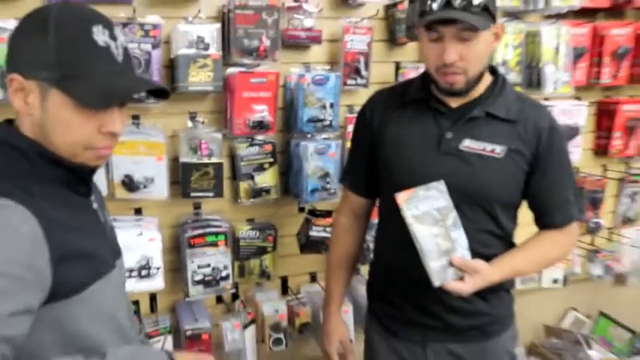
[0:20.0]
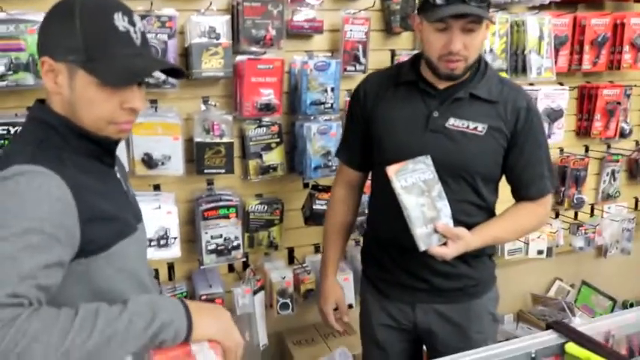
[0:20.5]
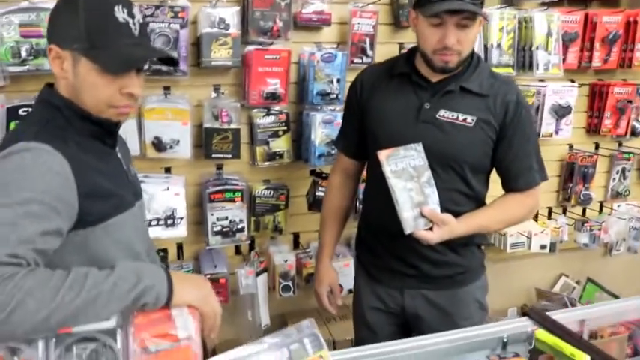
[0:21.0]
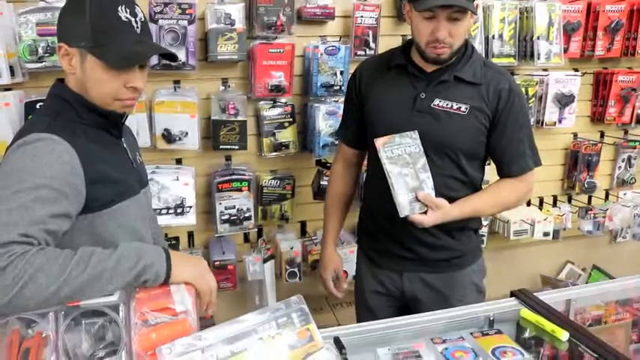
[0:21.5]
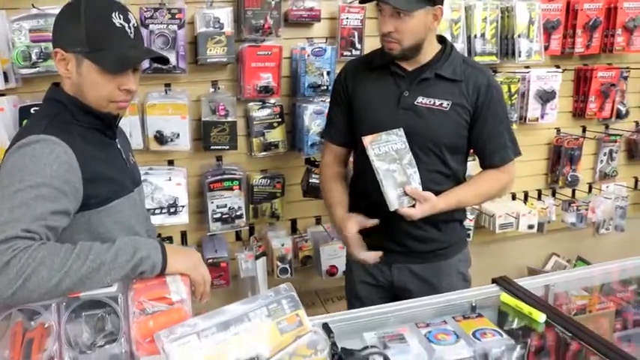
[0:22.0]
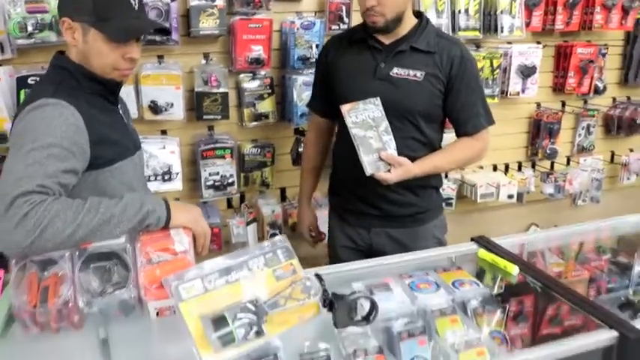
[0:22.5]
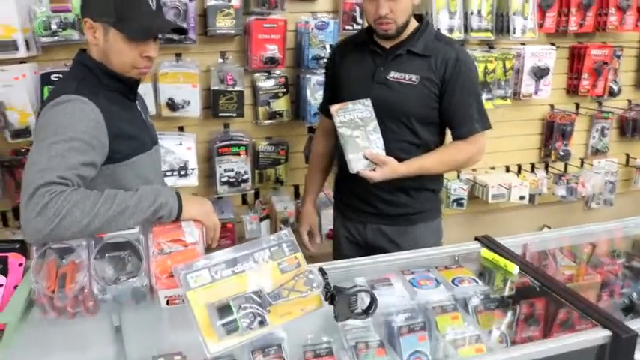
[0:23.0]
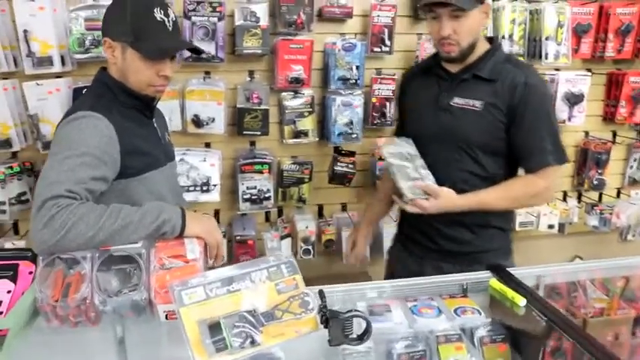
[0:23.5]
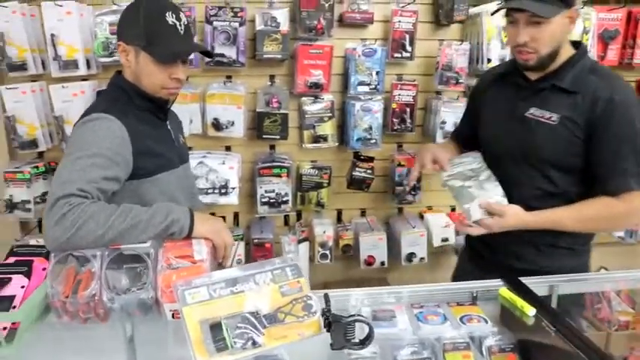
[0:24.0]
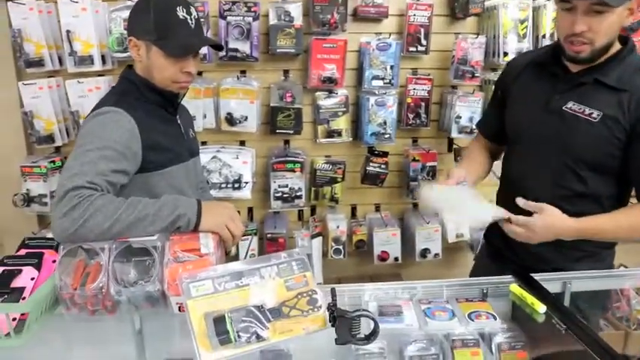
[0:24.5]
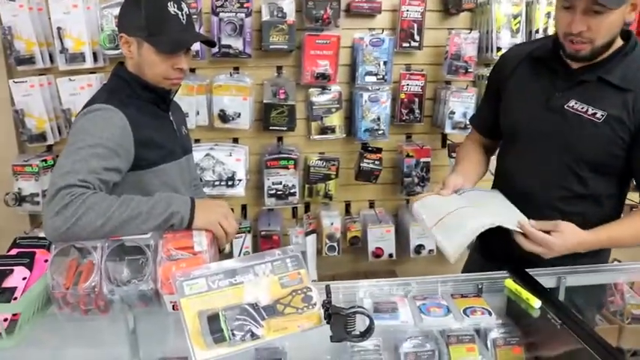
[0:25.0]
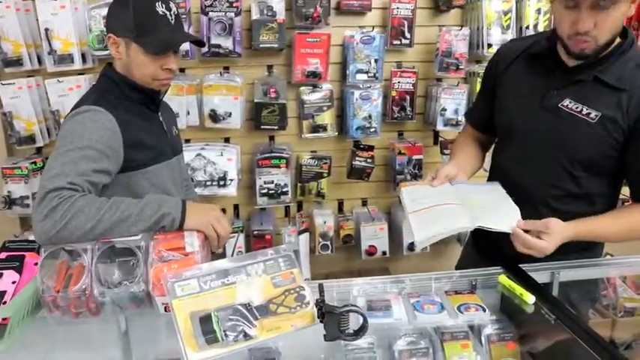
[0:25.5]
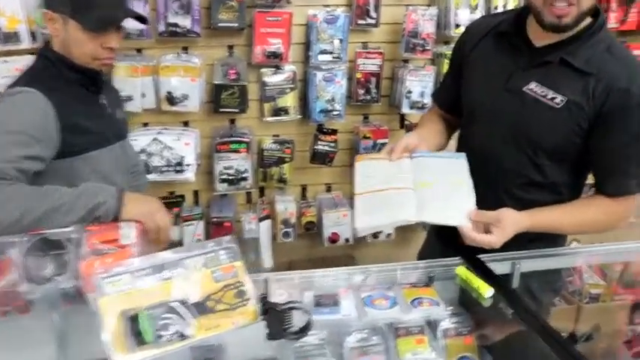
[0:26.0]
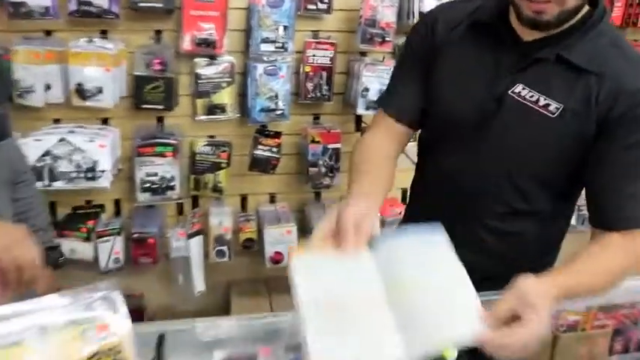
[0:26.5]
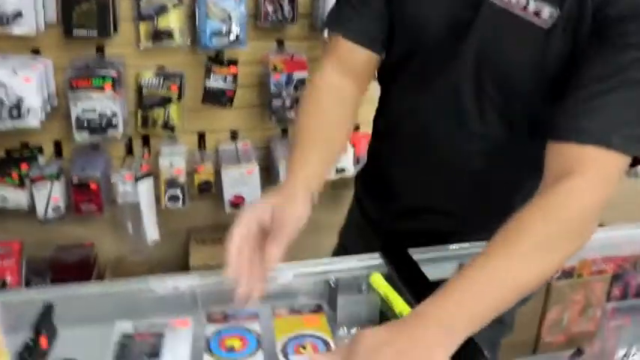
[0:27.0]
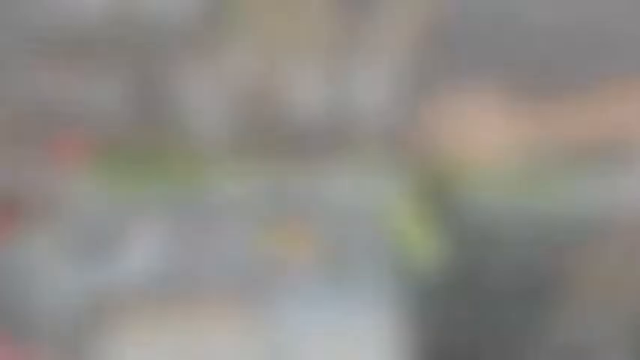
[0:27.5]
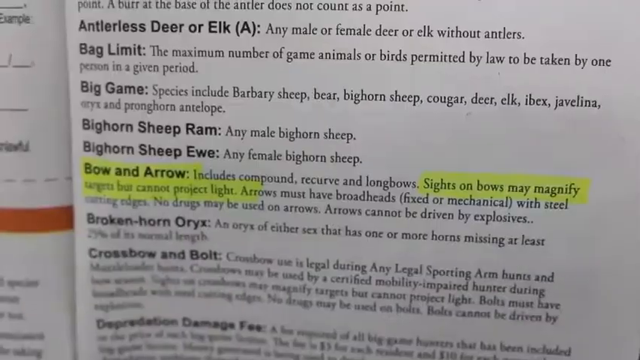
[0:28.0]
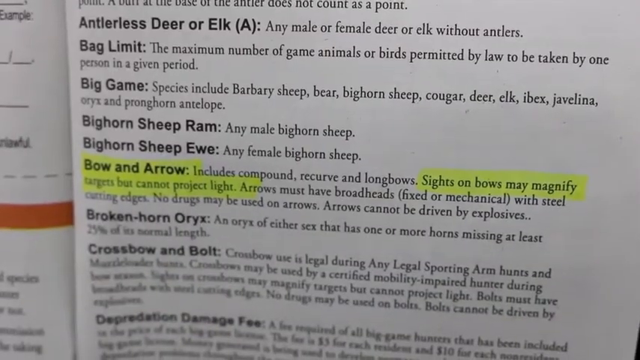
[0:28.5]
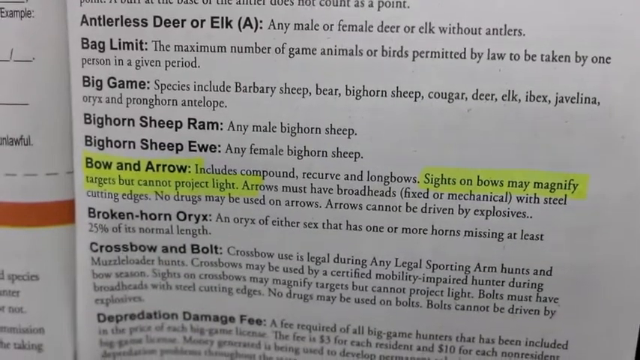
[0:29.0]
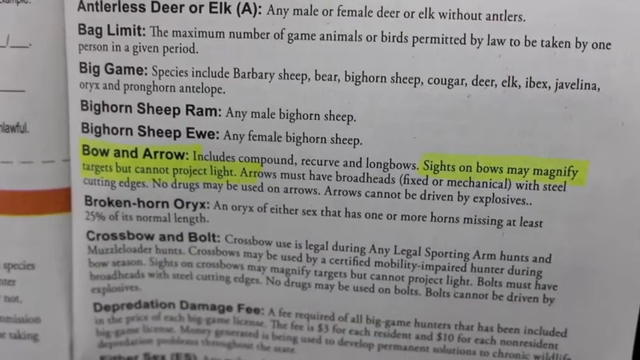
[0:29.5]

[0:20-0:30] Two men are behind the counter in a shop. The man on the right wears a black baseball hat and a black polo top. The man on the left, slightly shorter, also wears a black baseball hat along with an Under Armour grey and black jacket. There is a bunch of items on the counter, and the man on the left leans his right arm on them. The man on the right shows a piece of paper to the camera, and the camera zooms in on it. It appears to be a section of a book headed "bow and arrow", with the text "sights on bows may magnify targets but cannot project light" highlighted.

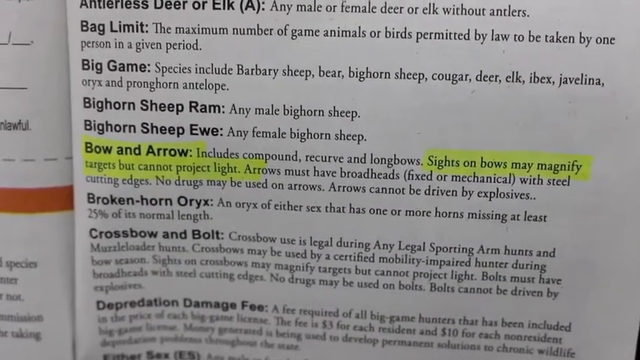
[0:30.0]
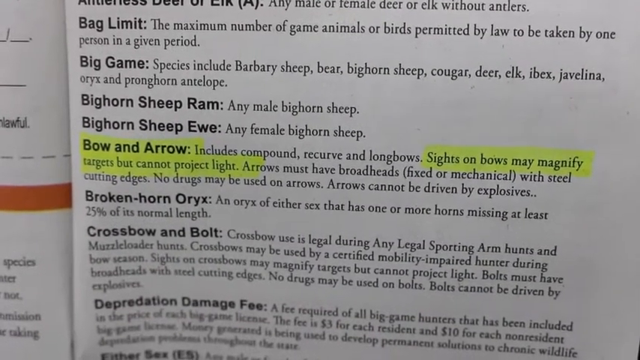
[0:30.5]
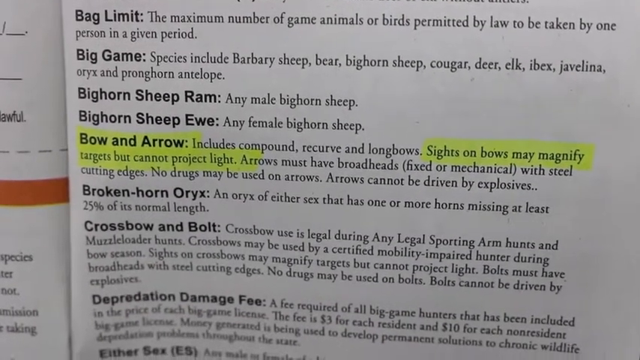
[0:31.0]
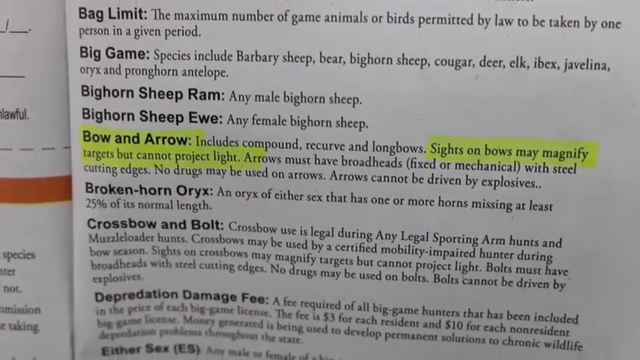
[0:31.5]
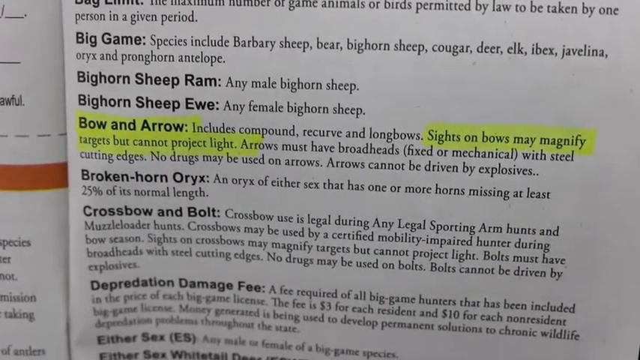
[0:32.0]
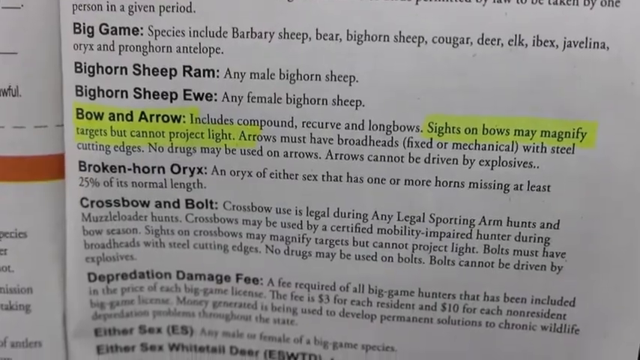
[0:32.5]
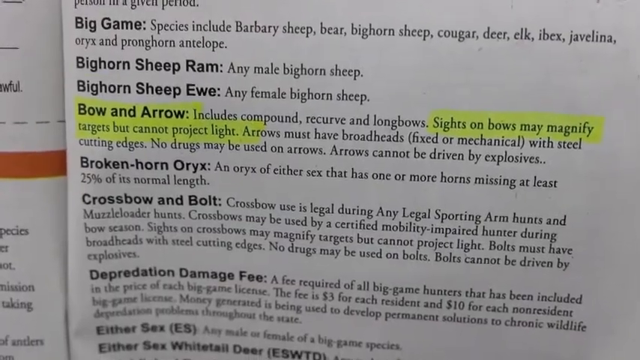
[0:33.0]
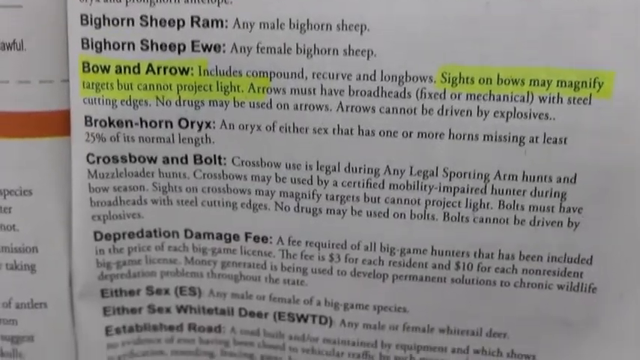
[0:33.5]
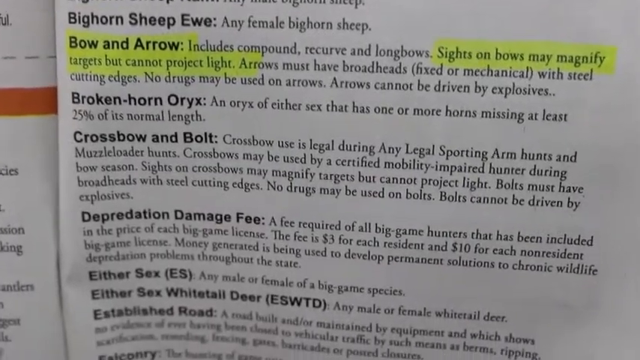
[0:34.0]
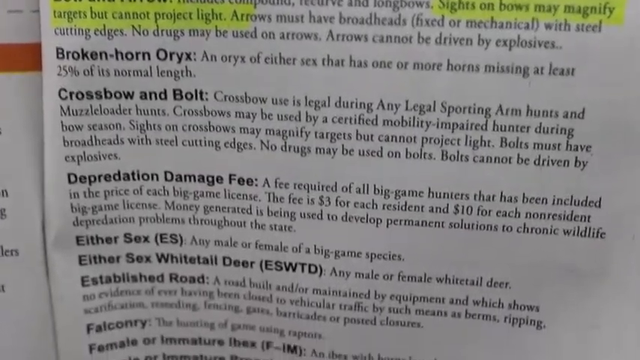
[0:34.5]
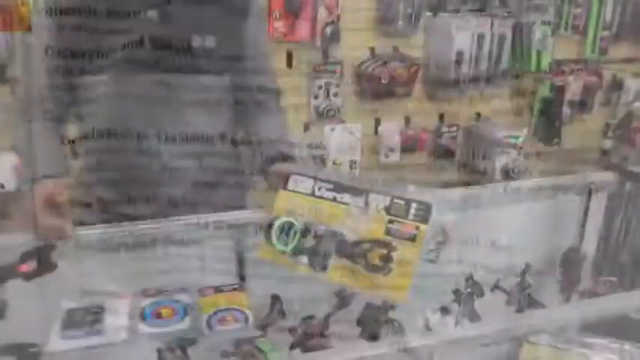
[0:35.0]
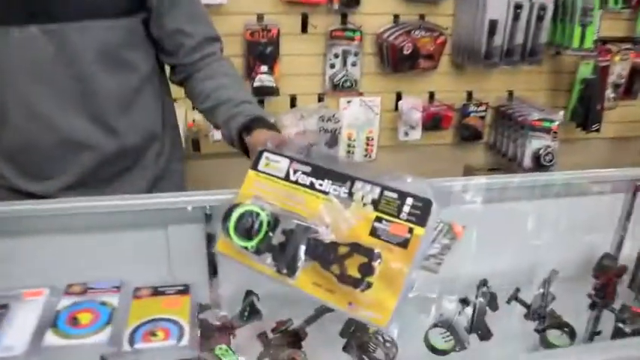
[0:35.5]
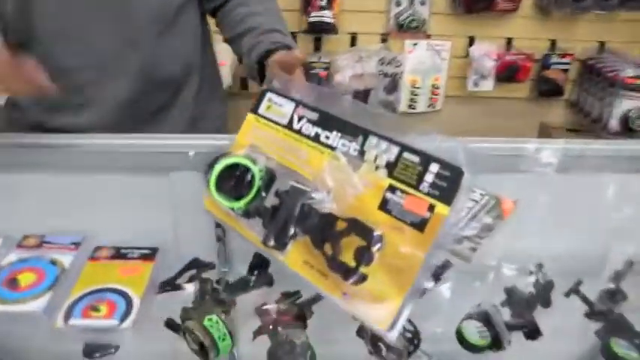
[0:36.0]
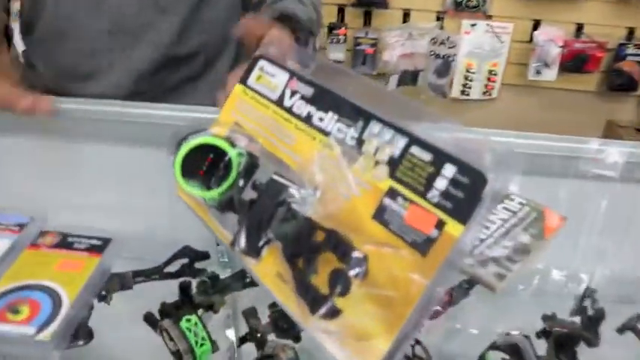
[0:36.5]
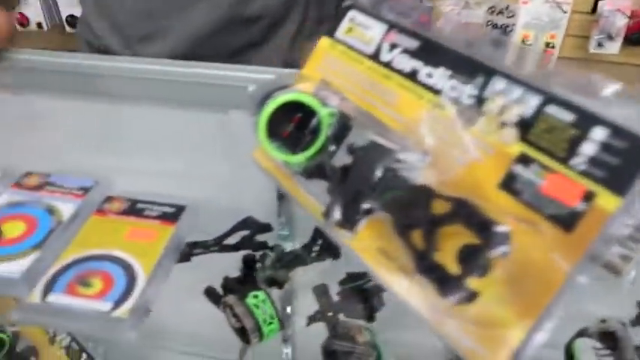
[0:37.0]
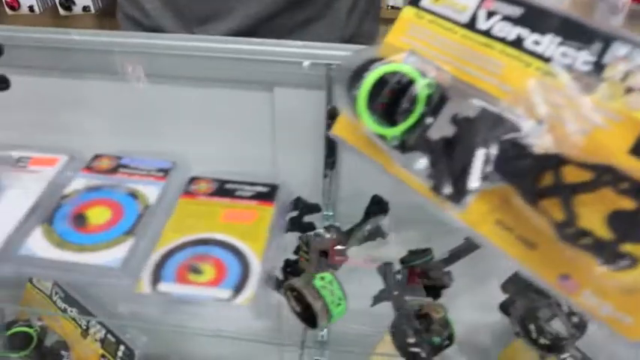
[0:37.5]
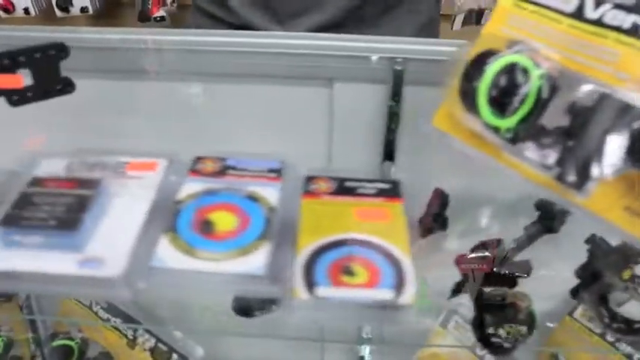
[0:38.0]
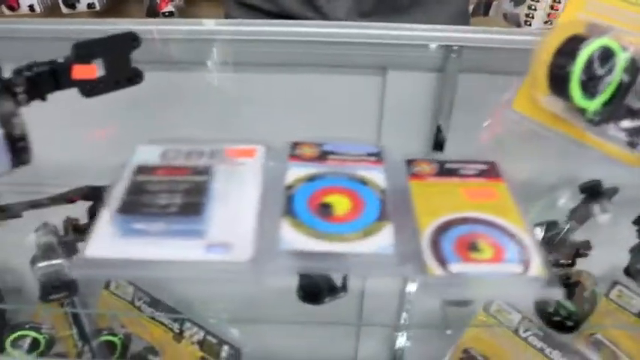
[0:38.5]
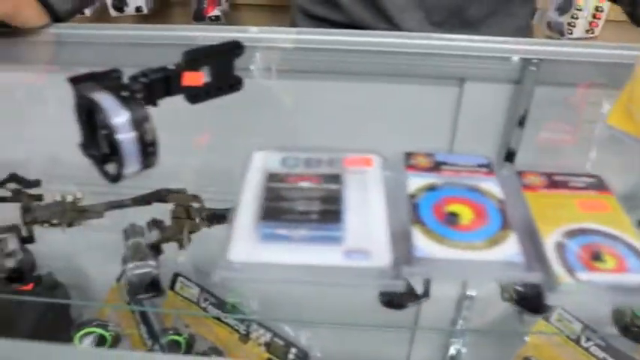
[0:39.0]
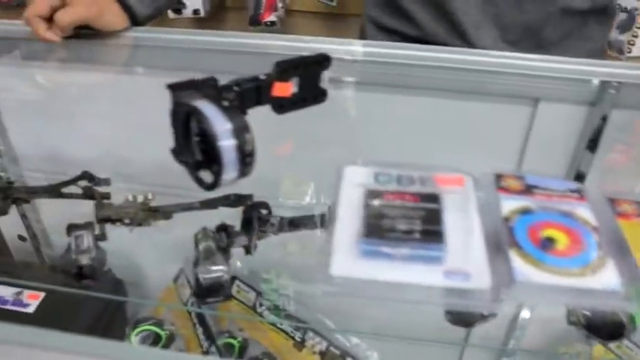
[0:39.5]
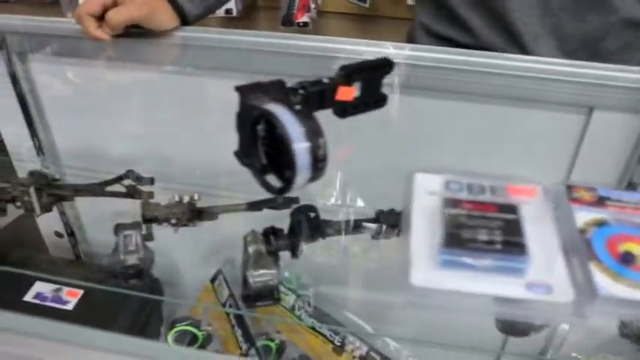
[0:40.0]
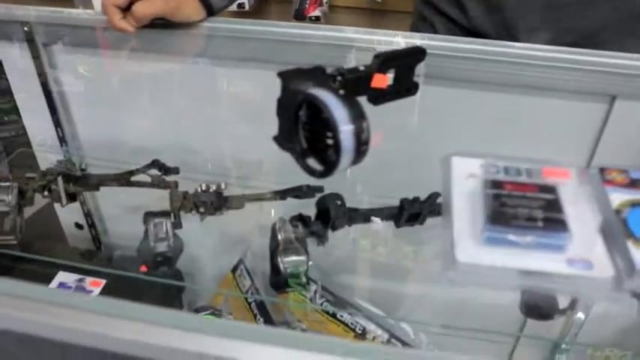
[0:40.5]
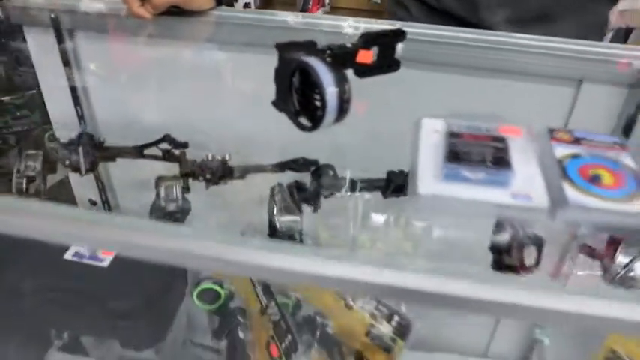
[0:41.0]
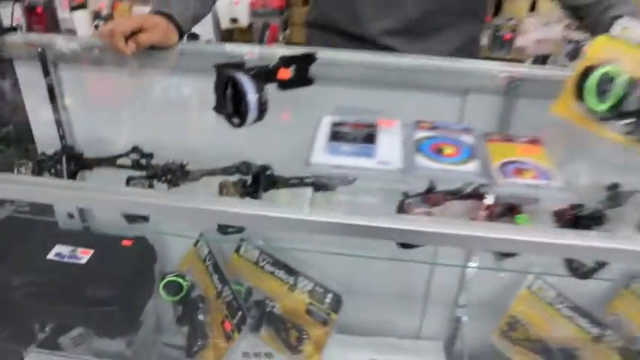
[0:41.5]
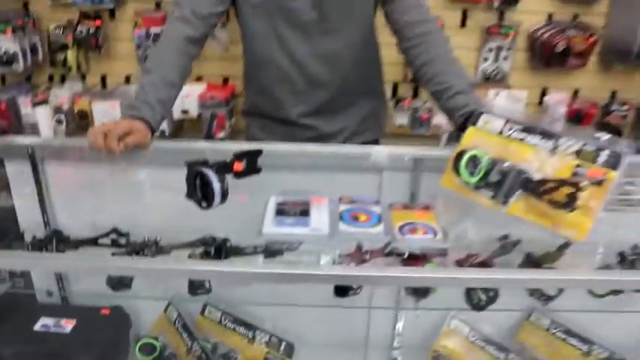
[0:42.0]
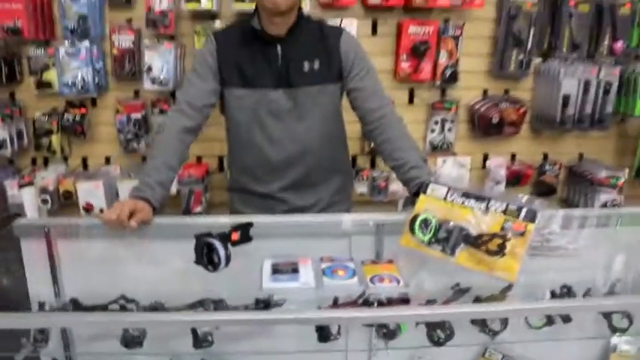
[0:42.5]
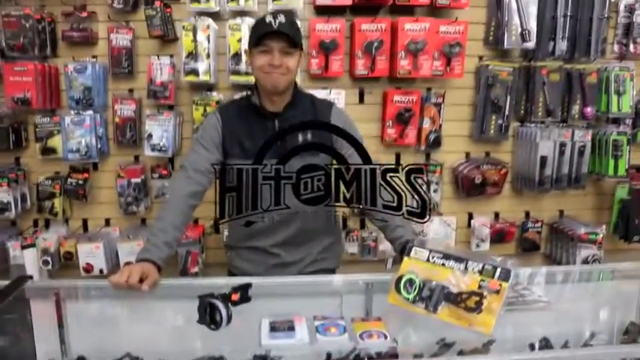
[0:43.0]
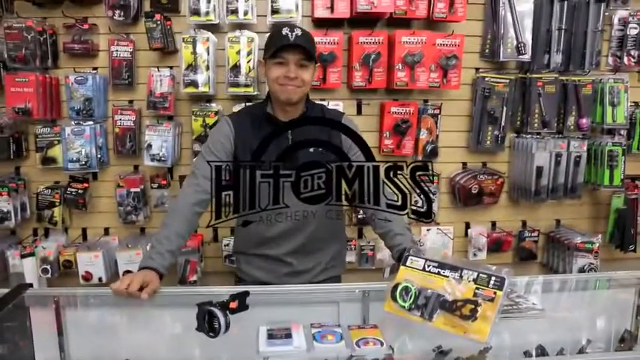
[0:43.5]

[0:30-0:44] An open book is shown, with a section headed "bow and arrow" in bold followed by a paragraph of text, and a lot of similar text above and below it. The paragraph says "sights on bows may magnify targets but cannot project light", and that section, along with the heading, is highlighted in yellow. The view scrolls down the page, then returns to the outdoor activity shop. An item is on the counter, and a man points at it with his hand; several other items are on the counter. The camera zooms up to a man at the counter who smiles at the camera. He wears a black hat and a grey-black jacket. The words "hit or miss" appear in the middle of the screen. Behind him, a shelf holds a lot of small items for sale, and the place looks like an outdoor activities shop.